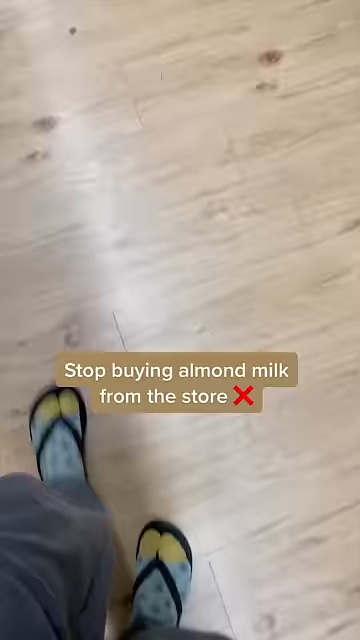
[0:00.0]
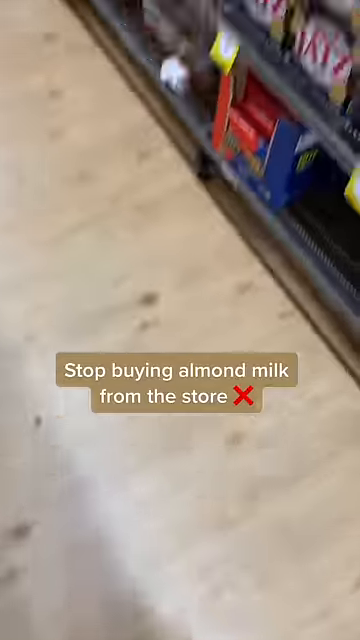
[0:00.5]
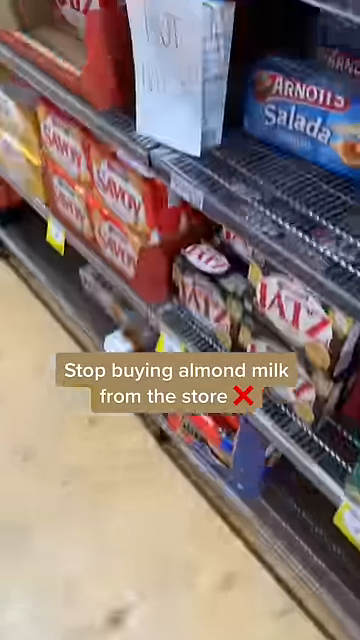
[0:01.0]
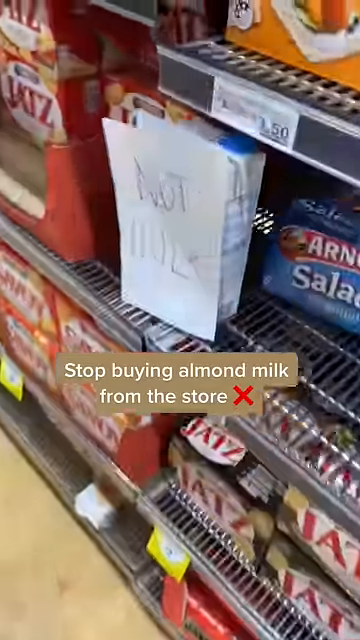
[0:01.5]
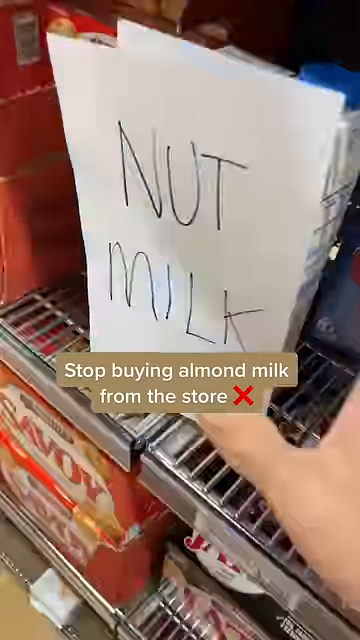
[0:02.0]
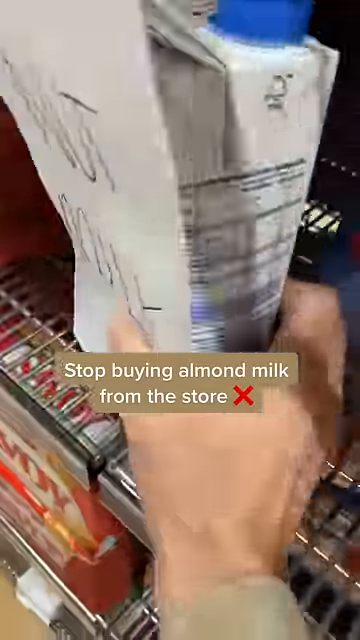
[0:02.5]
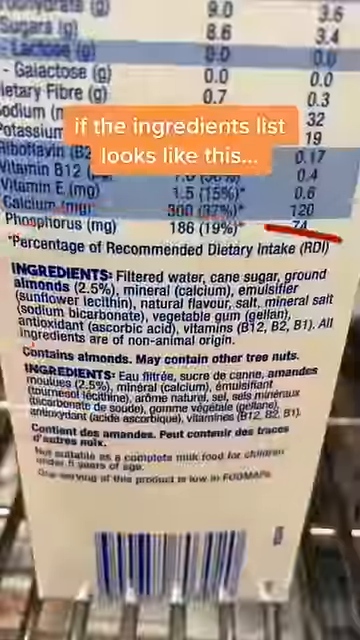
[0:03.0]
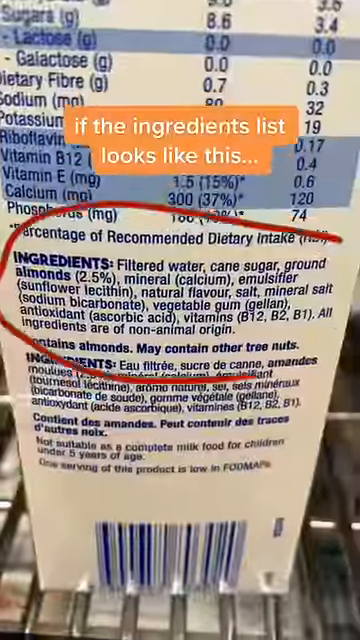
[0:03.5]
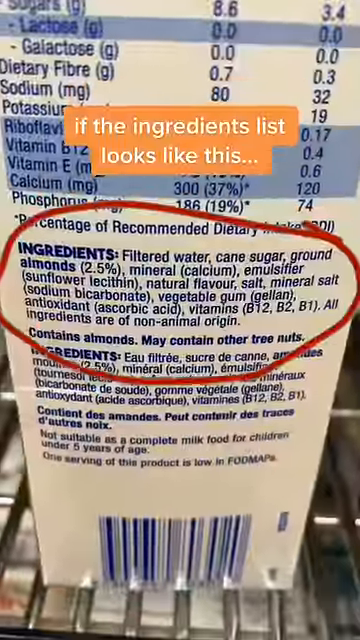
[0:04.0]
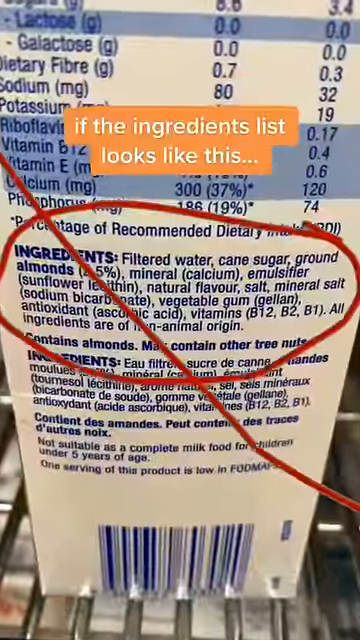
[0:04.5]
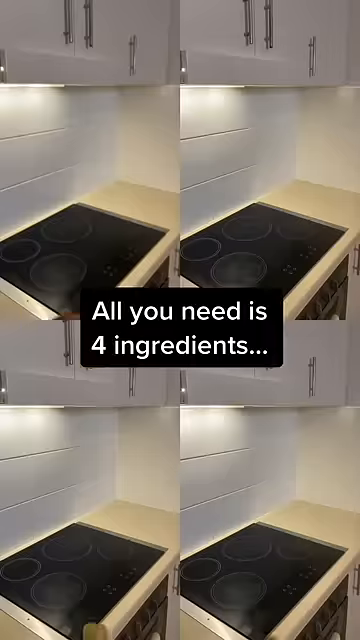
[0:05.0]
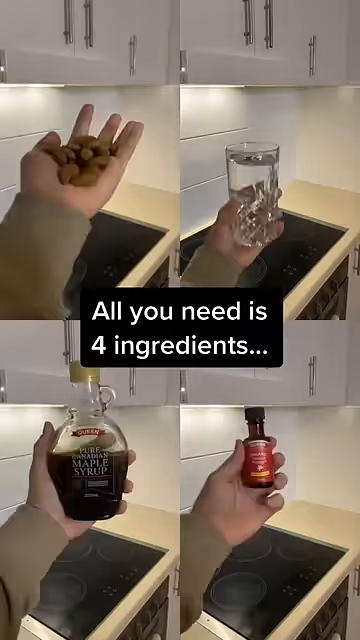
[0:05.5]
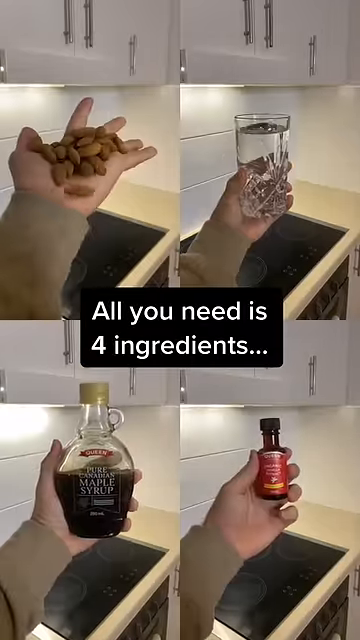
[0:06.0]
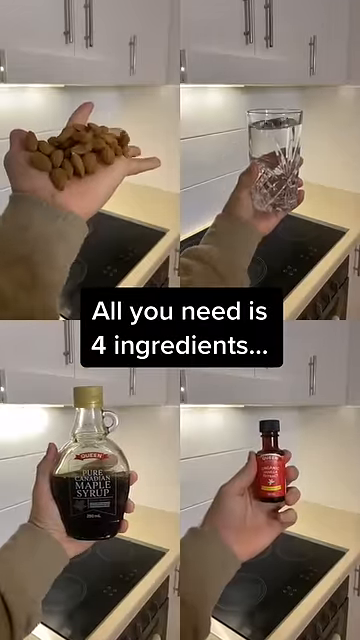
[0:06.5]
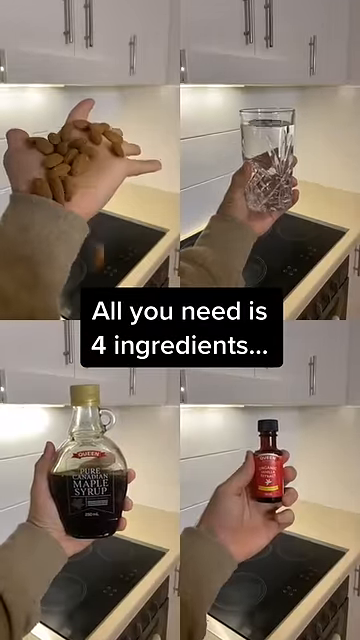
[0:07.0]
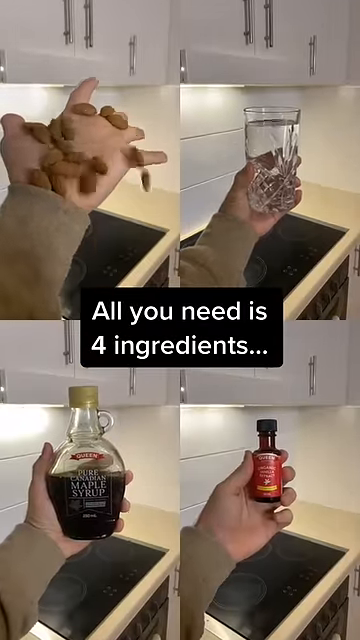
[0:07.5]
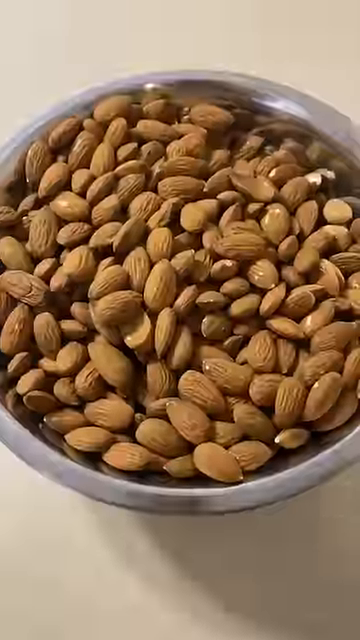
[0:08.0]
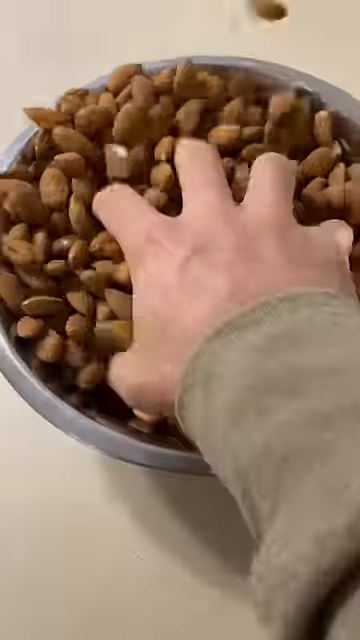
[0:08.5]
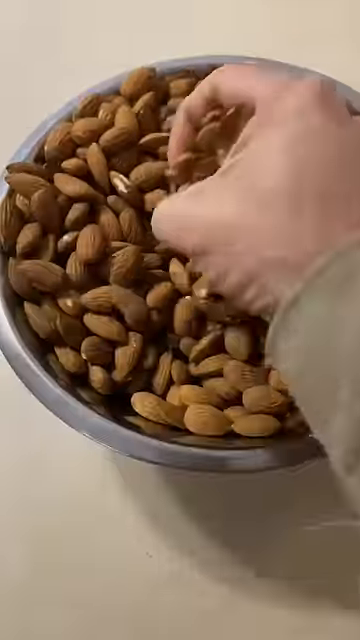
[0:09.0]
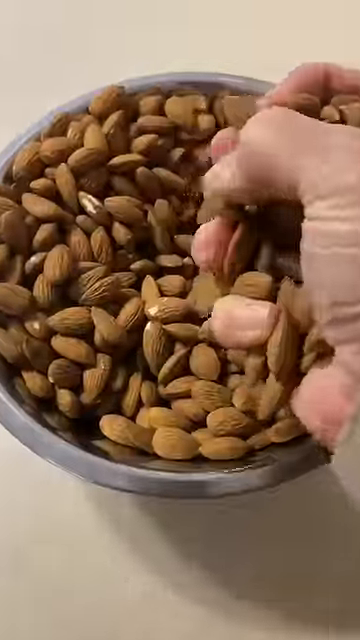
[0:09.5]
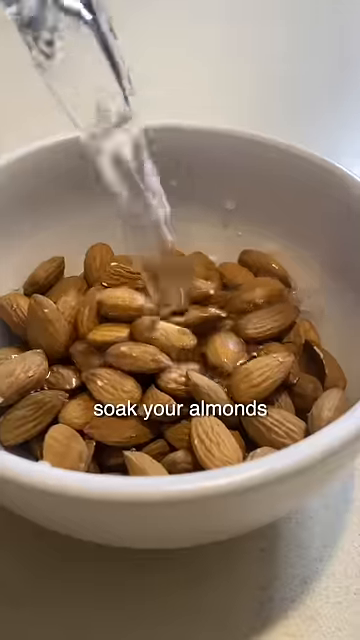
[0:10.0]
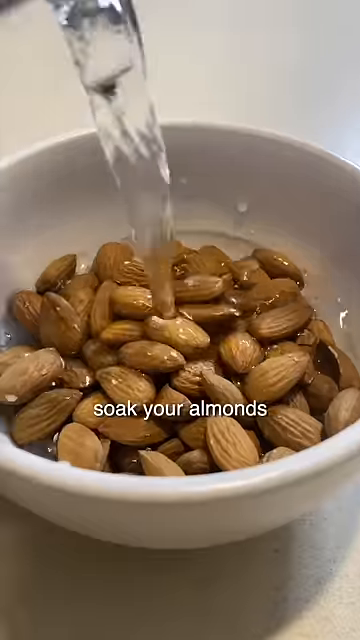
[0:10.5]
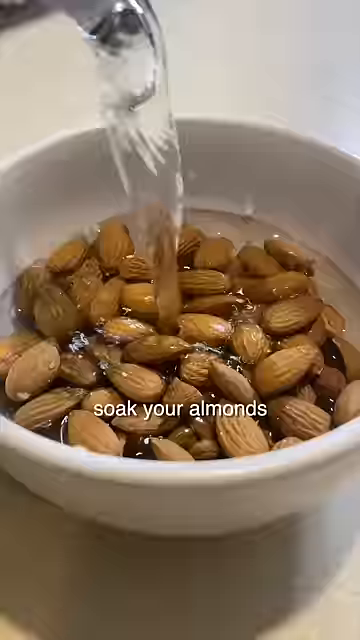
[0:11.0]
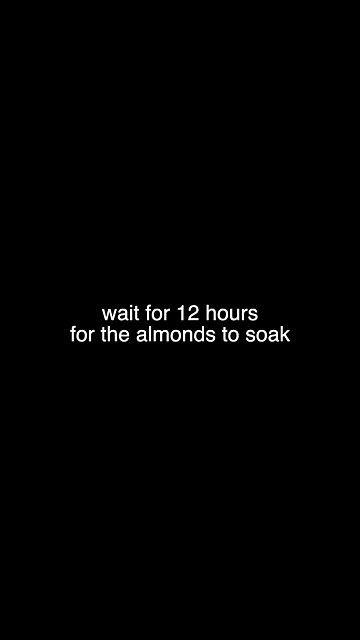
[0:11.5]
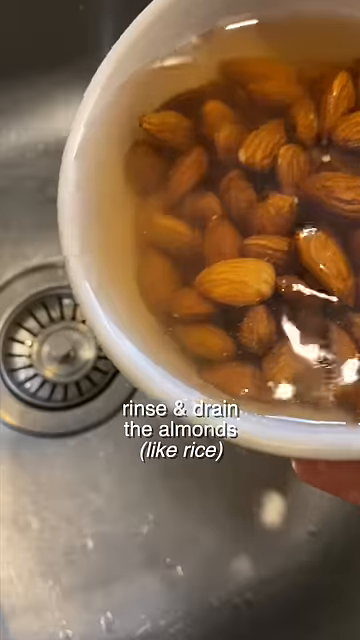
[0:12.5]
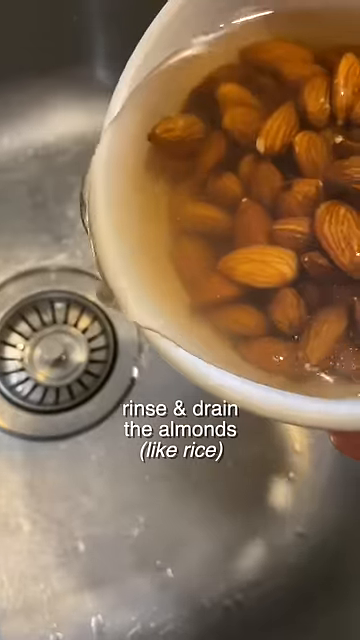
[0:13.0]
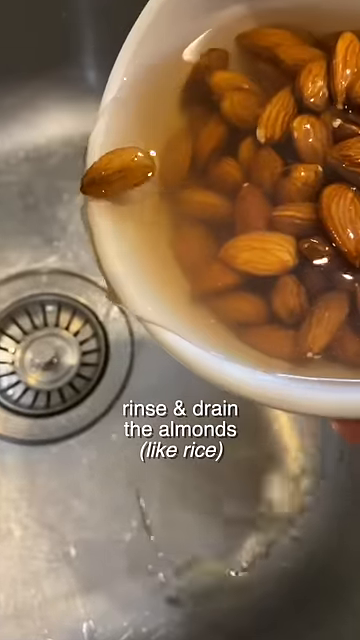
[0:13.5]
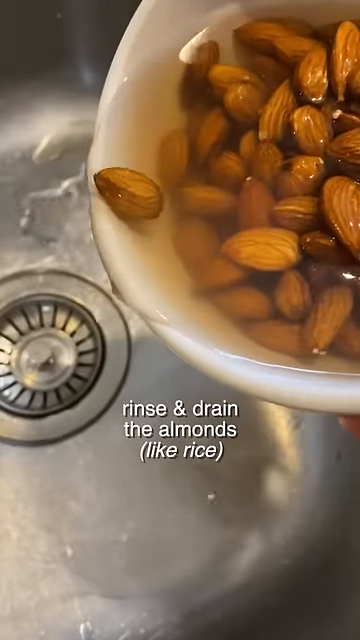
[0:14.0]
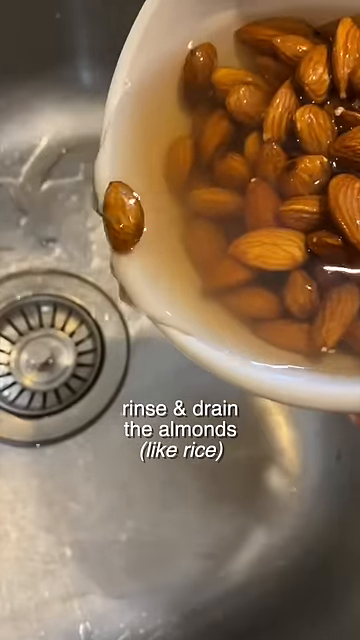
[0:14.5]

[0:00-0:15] Whole almonds, not blanched or roasted, are put into a bowl and water is added to them. The almonds soak for a minimum of 12 hours, and after soaking the water is poured off the almonds.